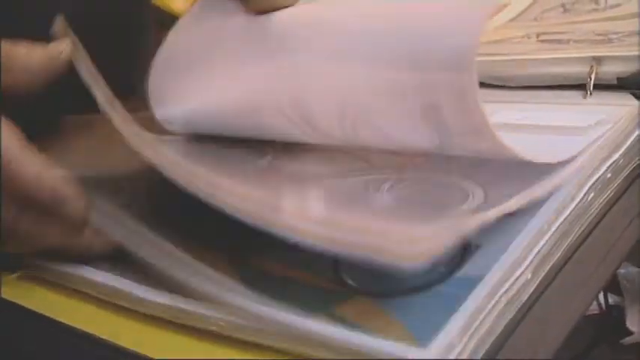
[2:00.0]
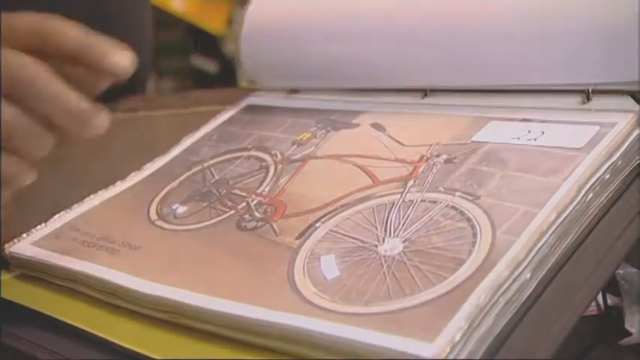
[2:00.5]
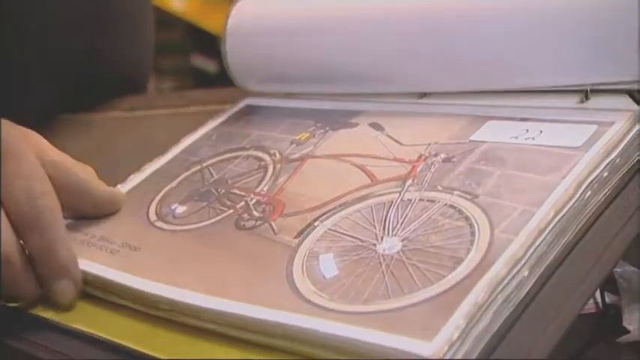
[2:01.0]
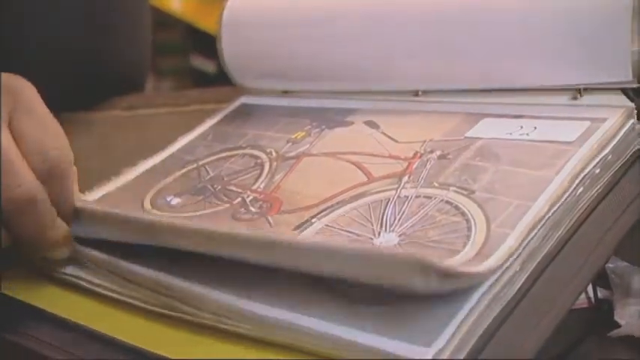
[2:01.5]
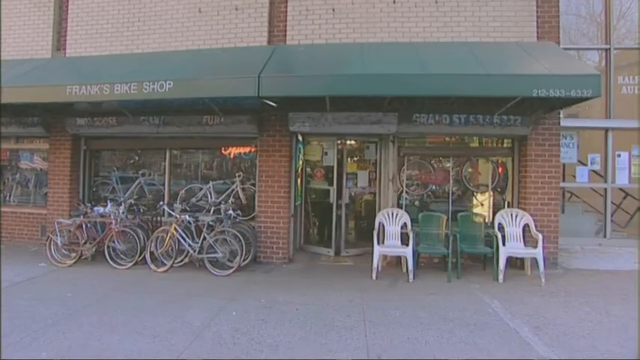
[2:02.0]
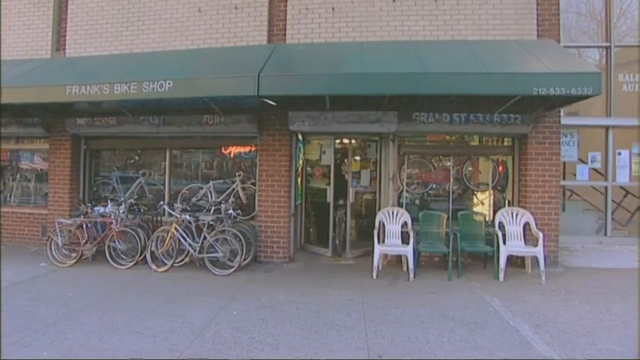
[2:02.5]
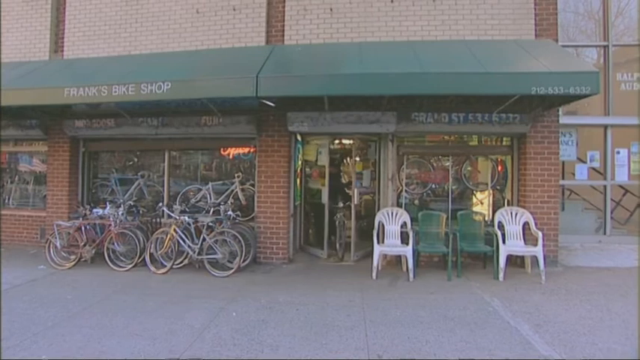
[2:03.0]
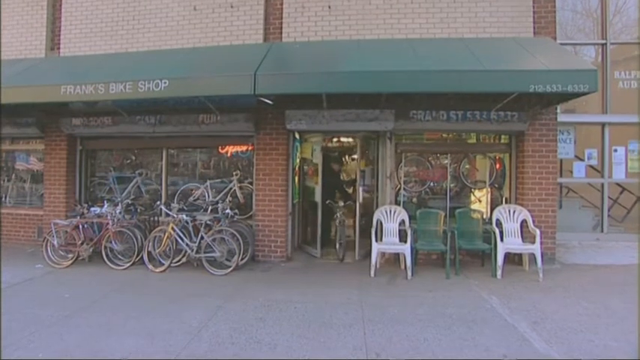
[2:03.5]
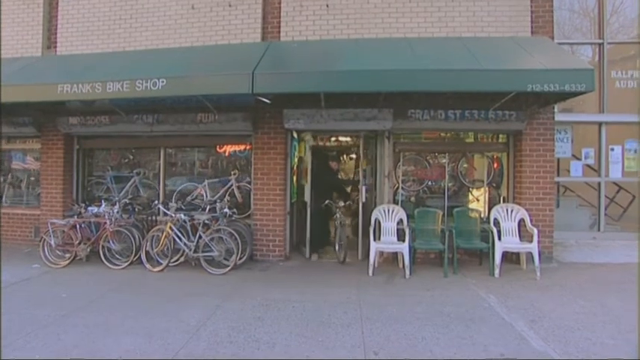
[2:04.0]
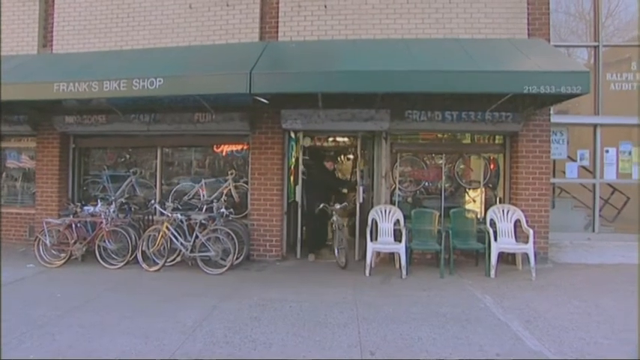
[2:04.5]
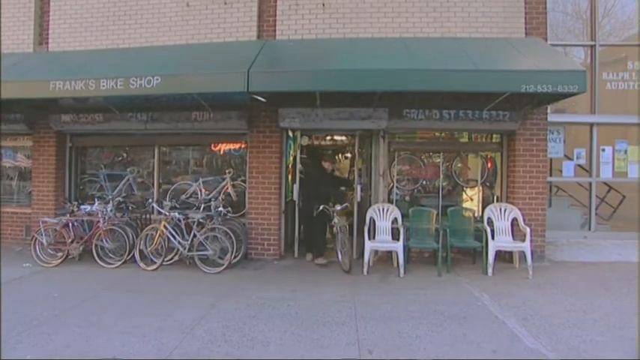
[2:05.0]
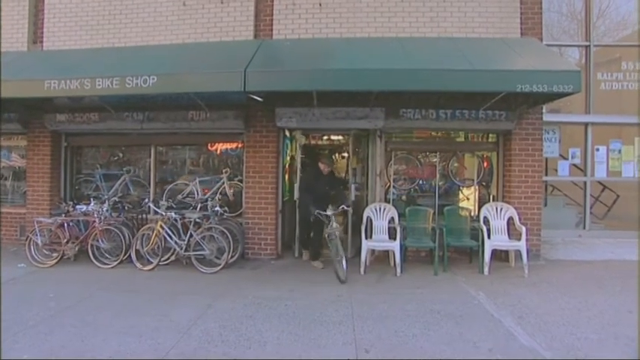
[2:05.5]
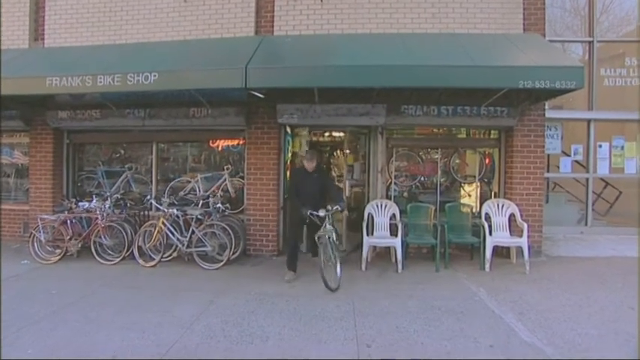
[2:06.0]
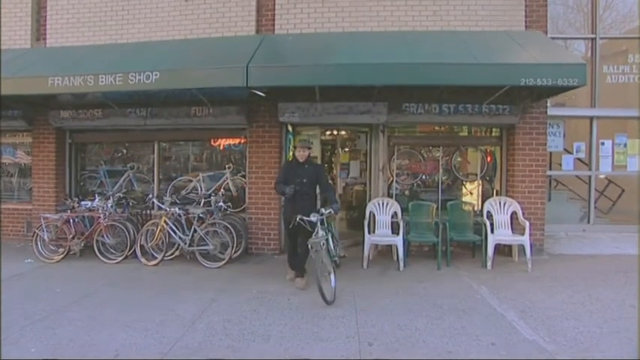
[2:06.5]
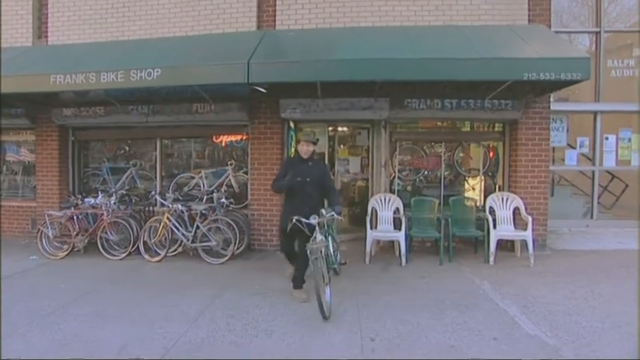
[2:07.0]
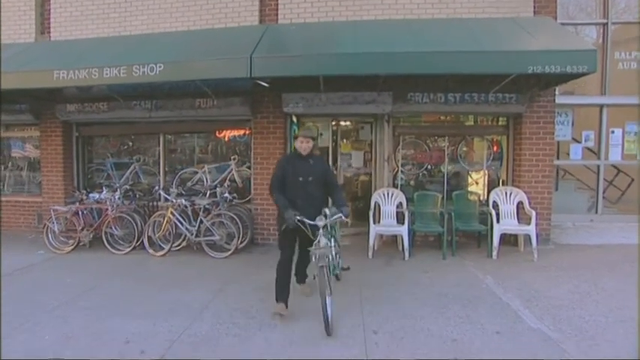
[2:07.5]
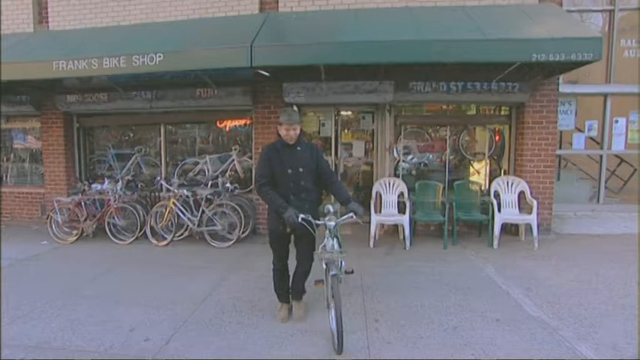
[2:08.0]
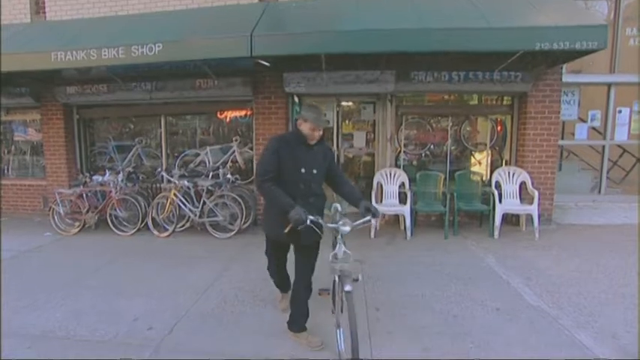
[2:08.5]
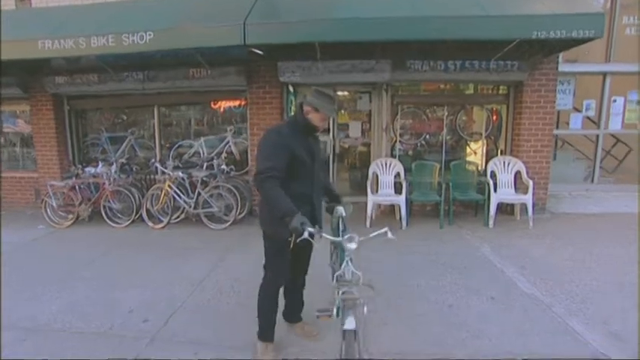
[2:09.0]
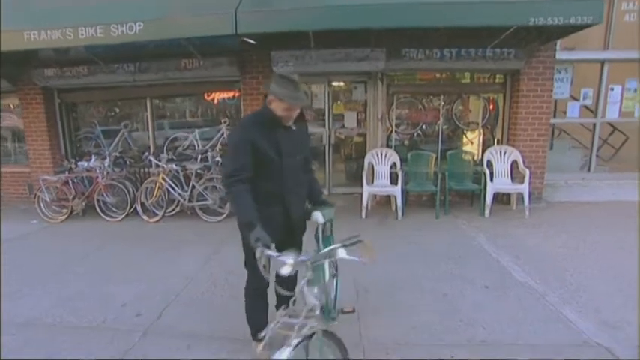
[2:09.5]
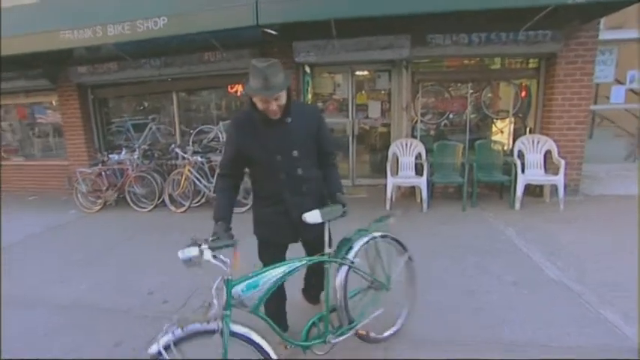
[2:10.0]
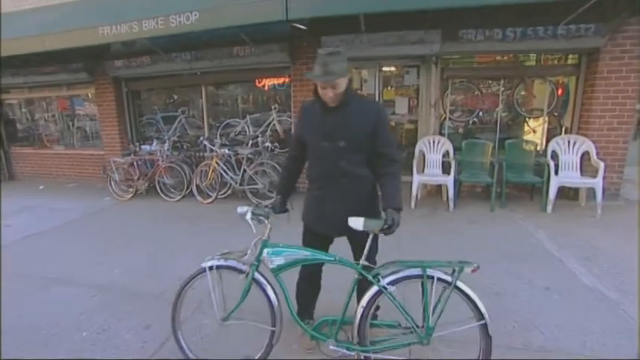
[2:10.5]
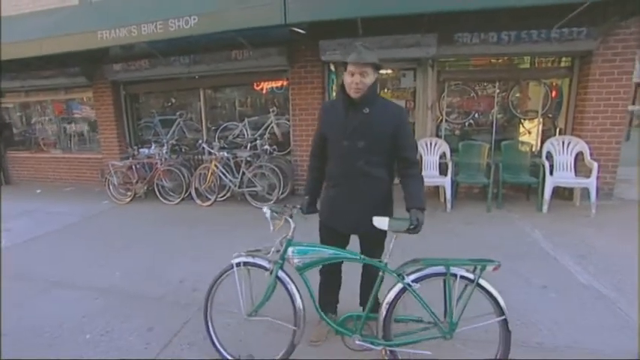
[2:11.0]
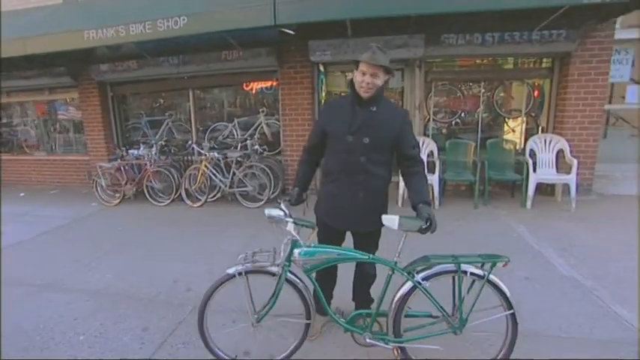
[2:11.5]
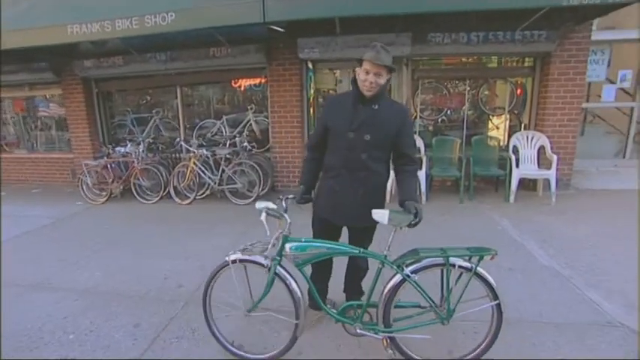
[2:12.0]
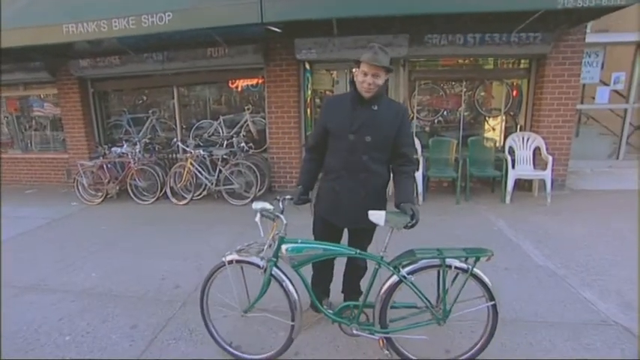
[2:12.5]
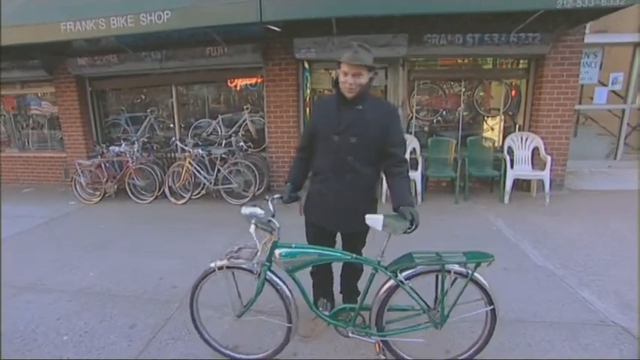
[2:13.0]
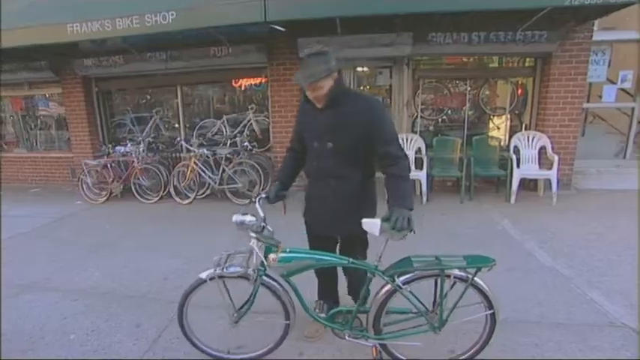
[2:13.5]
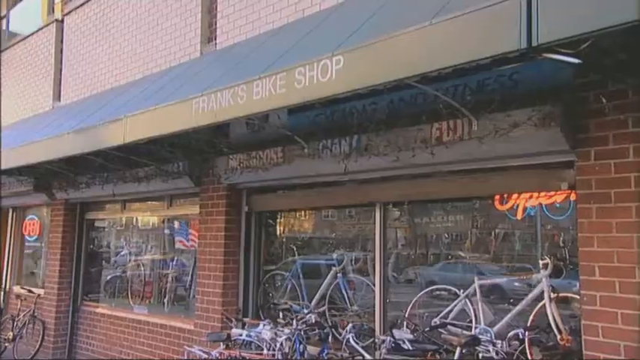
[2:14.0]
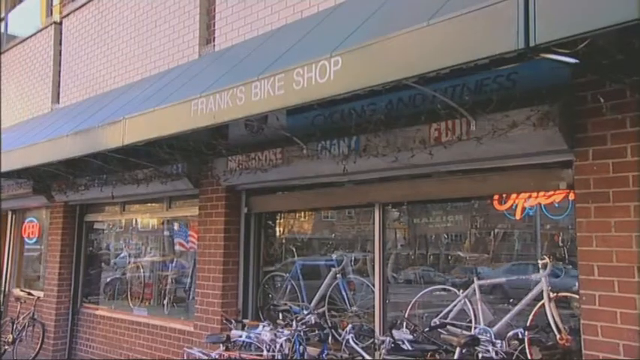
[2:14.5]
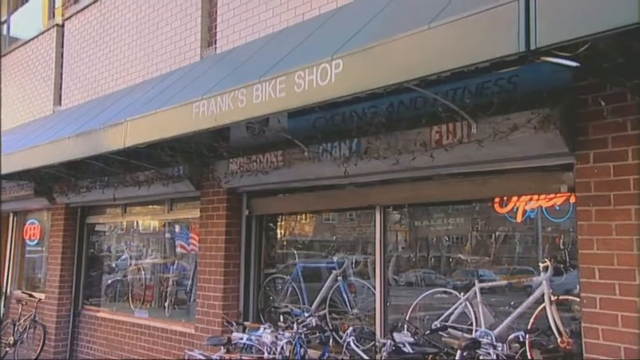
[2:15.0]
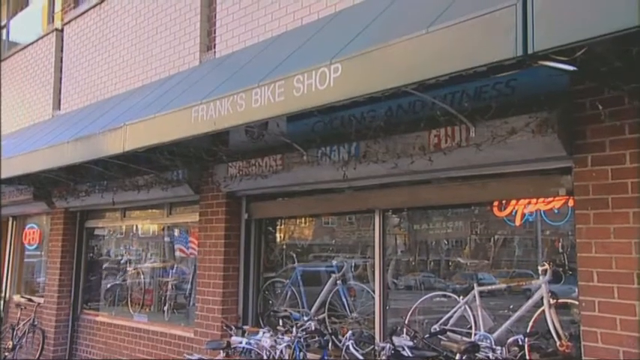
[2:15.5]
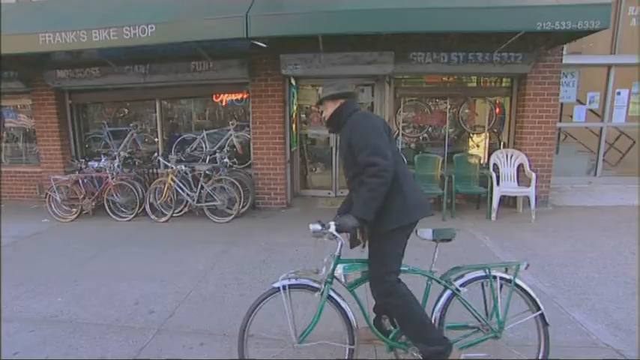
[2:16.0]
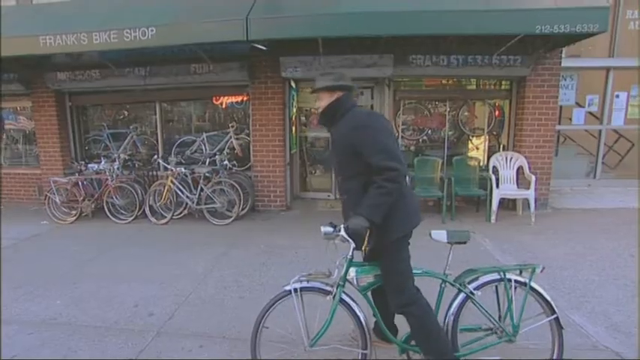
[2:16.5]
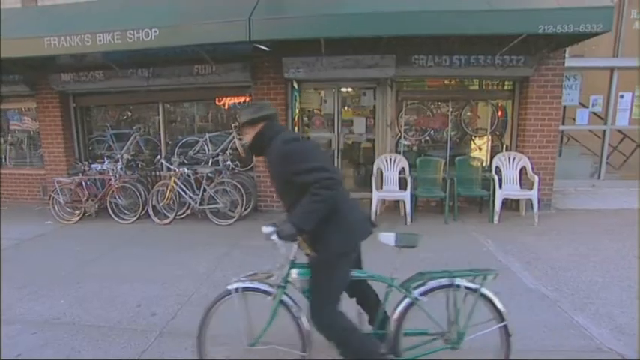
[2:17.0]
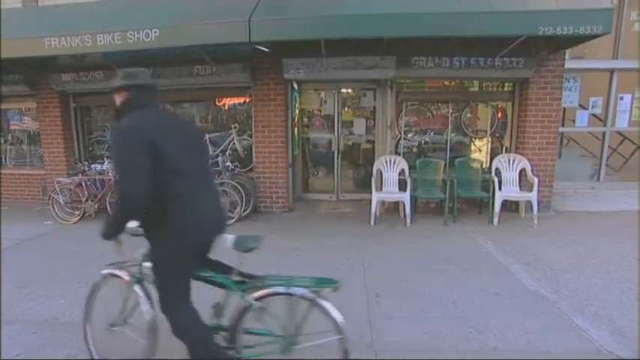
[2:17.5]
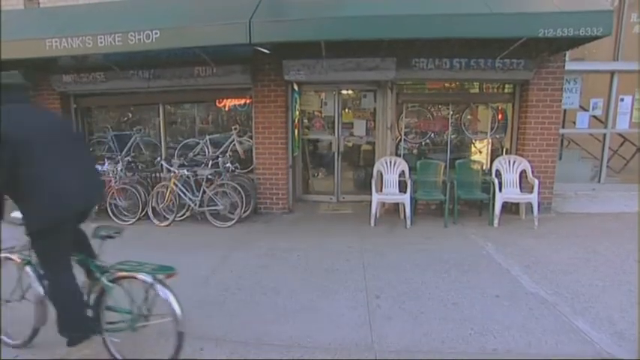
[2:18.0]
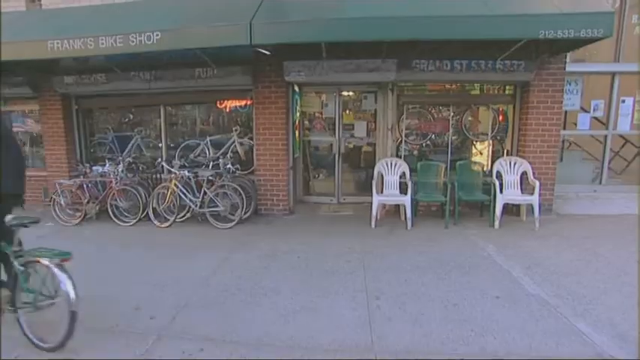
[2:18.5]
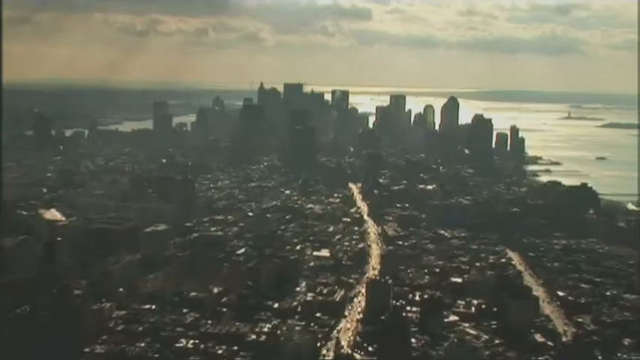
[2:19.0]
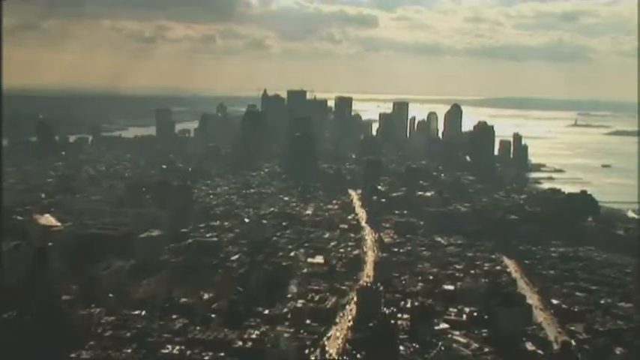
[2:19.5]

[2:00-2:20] Inside Frank's Bicycle Shop, the man browses a booklet full of photographs of bicycles for sale. He picks a green bicycle, purchases it and shows it as he wheels it outside. It looks like it could be a classic Schwinn, apparently a 1950s version. He pedals it away into the busy New York street. Many bikes for sale line the windows outside Frank's Bike Shop.